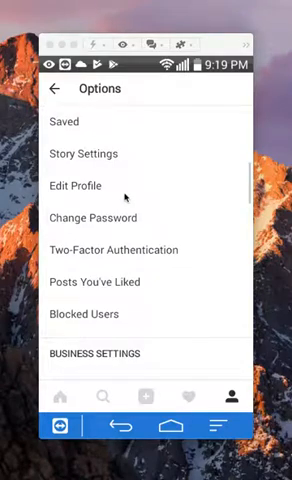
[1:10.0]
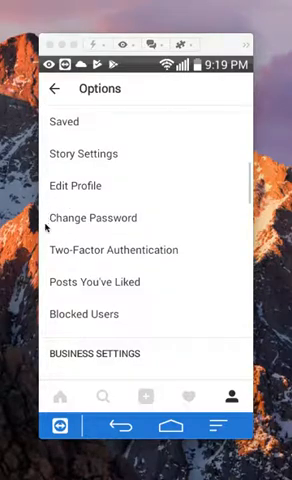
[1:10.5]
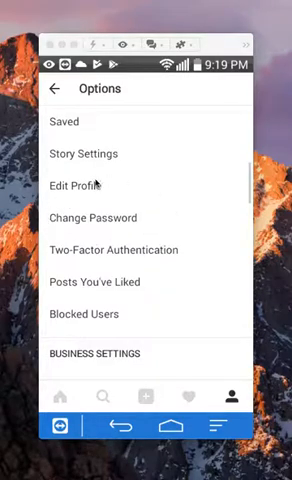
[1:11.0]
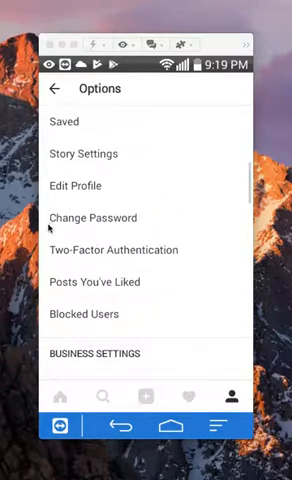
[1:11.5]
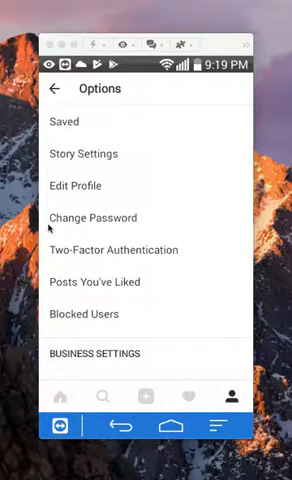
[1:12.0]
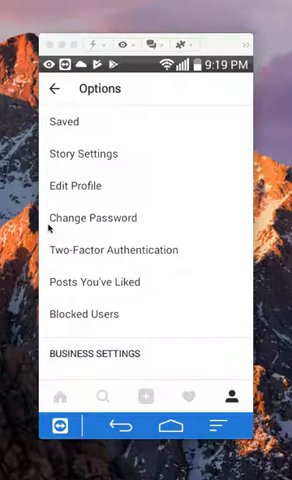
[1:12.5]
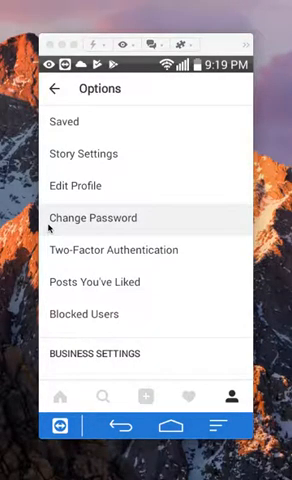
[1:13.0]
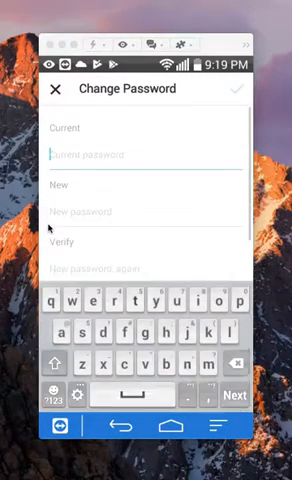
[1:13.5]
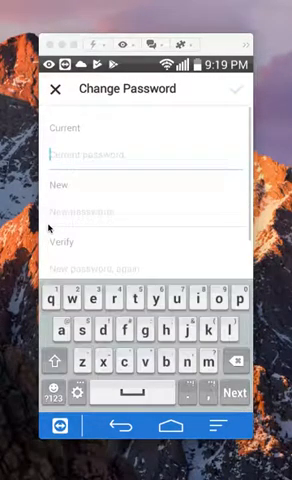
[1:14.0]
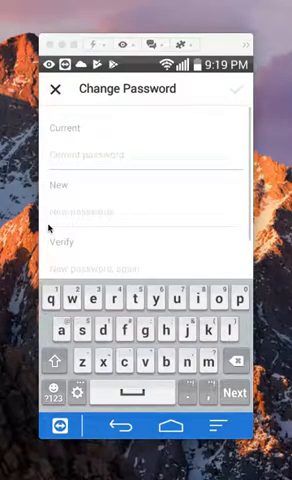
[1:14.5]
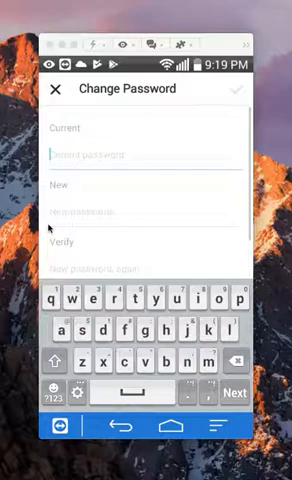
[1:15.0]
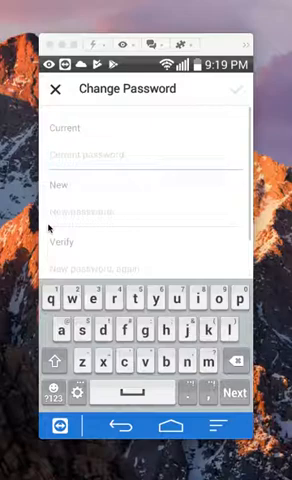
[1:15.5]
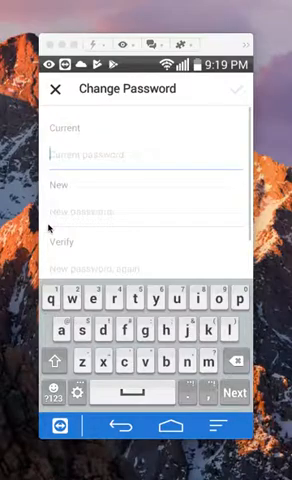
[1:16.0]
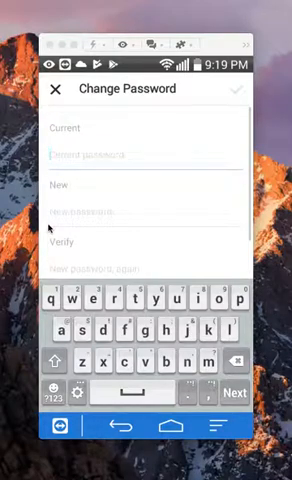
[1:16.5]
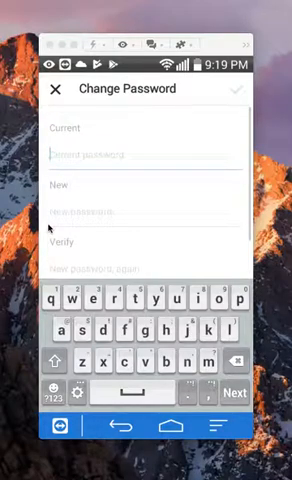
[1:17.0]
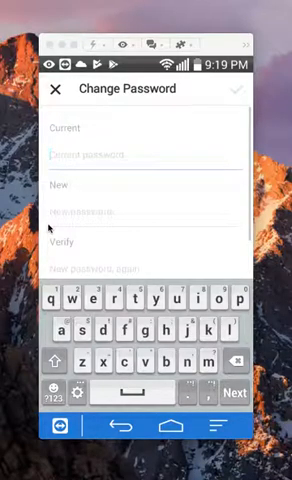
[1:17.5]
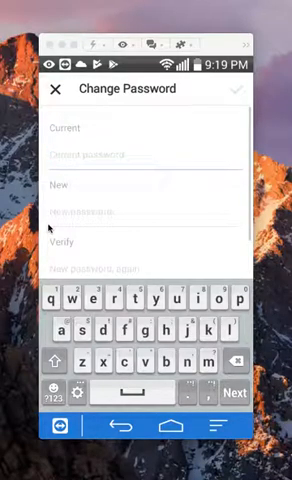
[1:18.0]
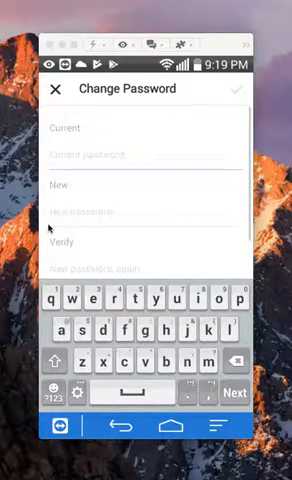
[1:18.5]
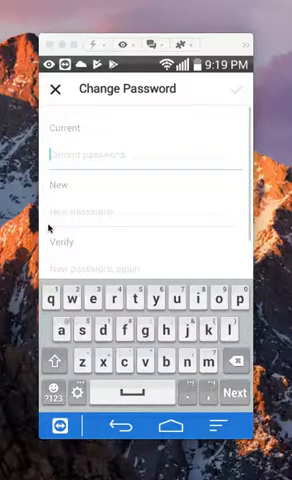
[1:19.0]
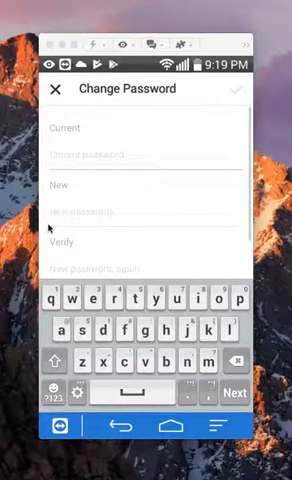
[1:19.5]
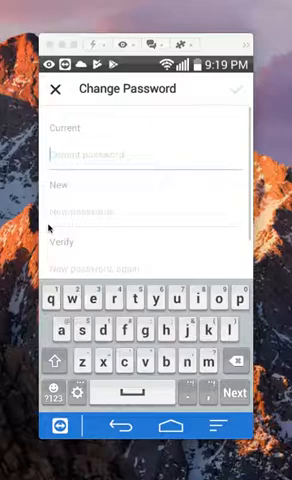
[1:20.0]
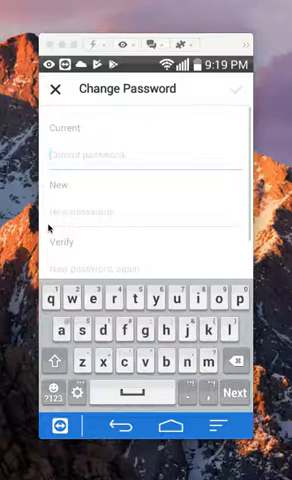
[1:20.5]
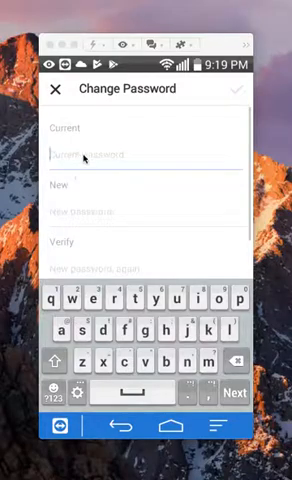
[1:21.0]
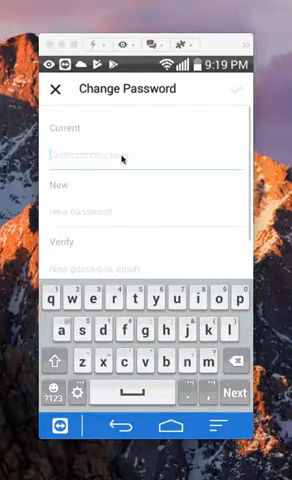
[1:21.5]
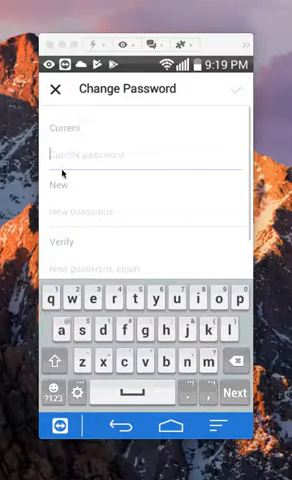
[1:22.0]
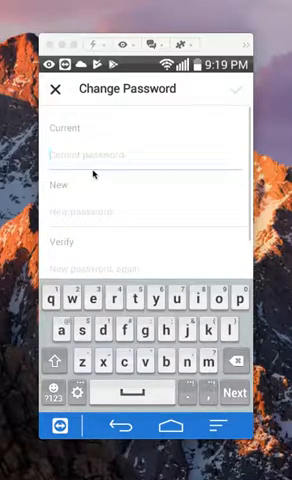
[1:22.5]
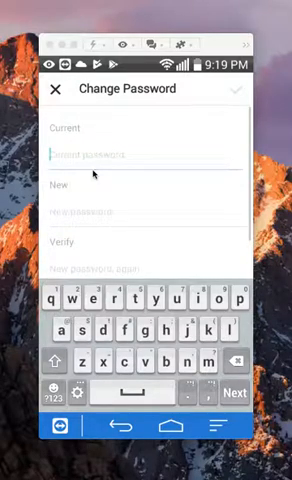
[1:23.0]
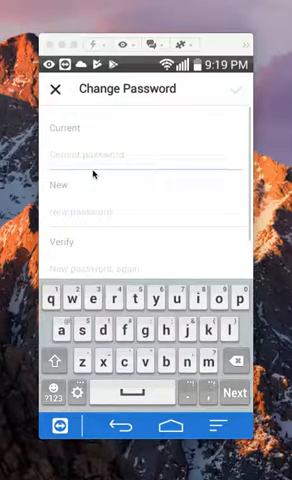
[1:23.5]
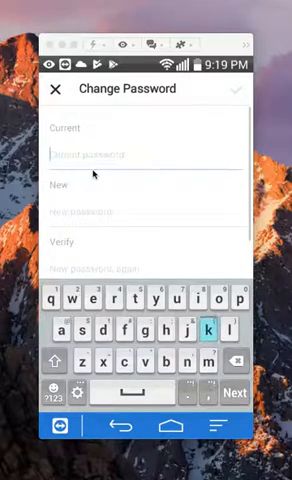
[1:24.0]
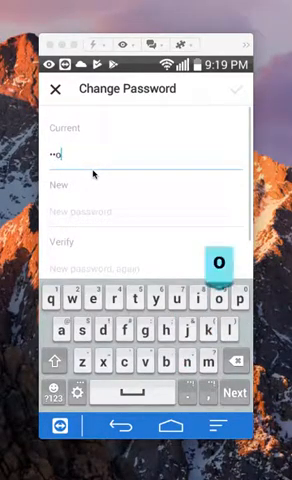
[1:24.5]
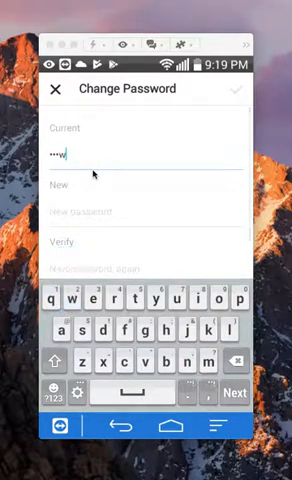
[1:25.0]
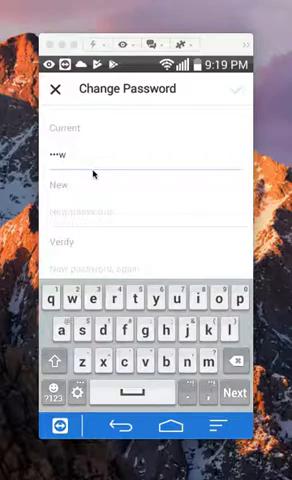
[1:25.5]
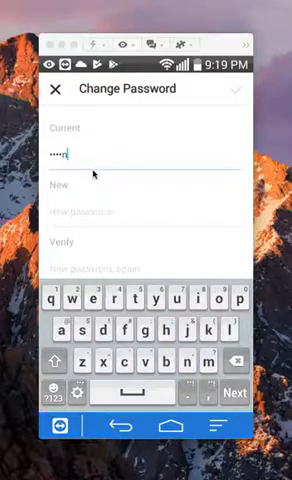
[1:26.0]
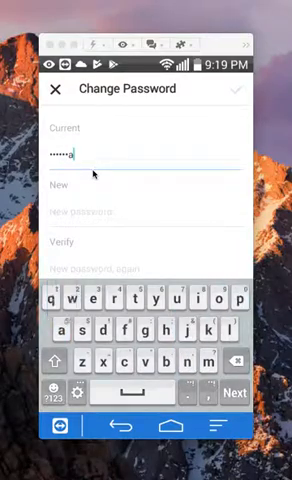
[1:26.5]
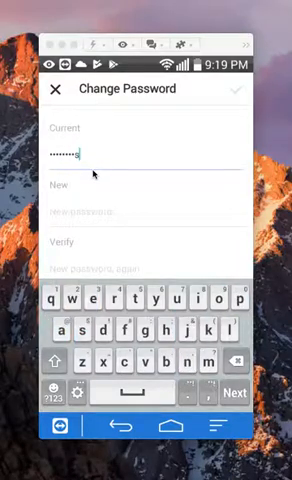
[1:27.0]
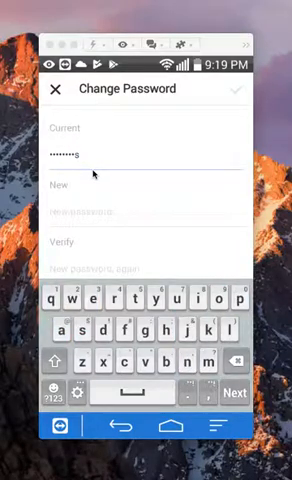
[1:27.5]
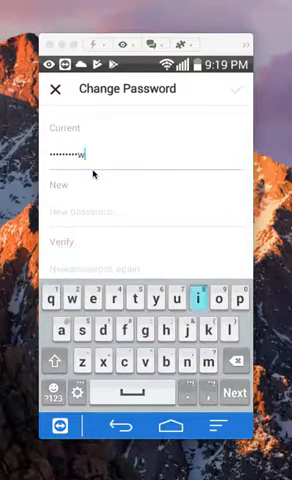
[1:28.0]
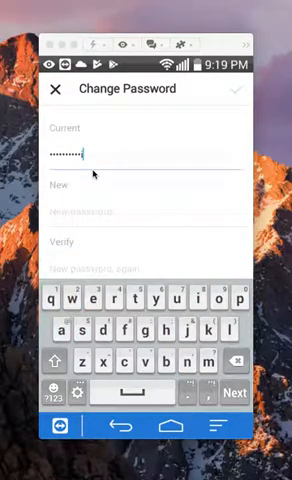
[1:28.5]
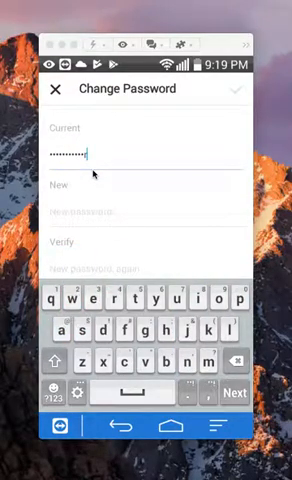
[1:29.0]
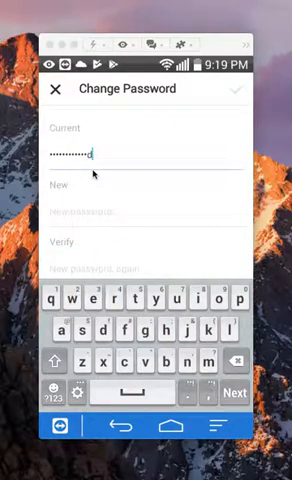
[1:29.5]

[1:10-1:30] An options page lists "Saved", "Story settings", "Edit profile", "Change password", "Two-factor authentication", "Blocked users" and "Business settings". The cursor circles Change Password, and a Change Password screen opens with a Current field. The cursor flashes in the current password field, a current password is typed in, and then the New field is selected. The video then changes back to the options screen, where the time display, battery meter, cell phone signal strength and Wi-Fi signal strength are visible. At the bottom are multiple opaque icons: Home, Search, Plus, Heart and Person, with the Person button highlighted black. Change Password is circled, and as typing begins in the password field, a keyboard pops up.